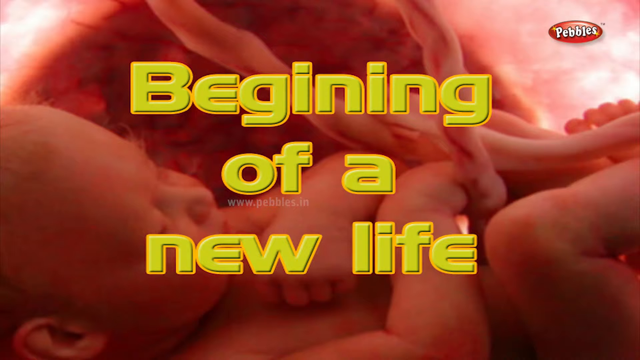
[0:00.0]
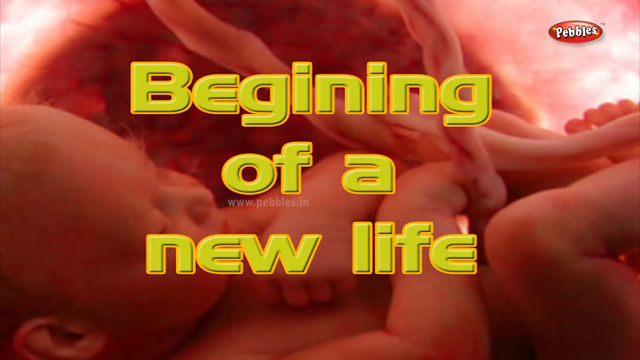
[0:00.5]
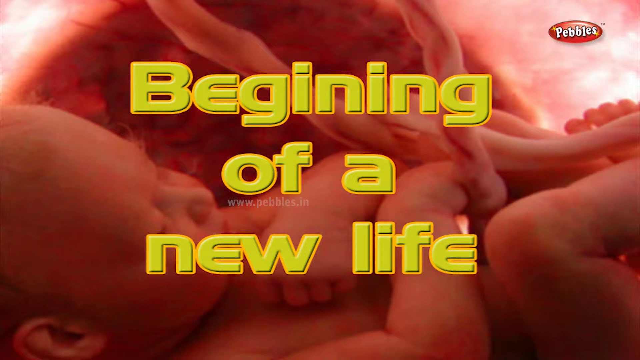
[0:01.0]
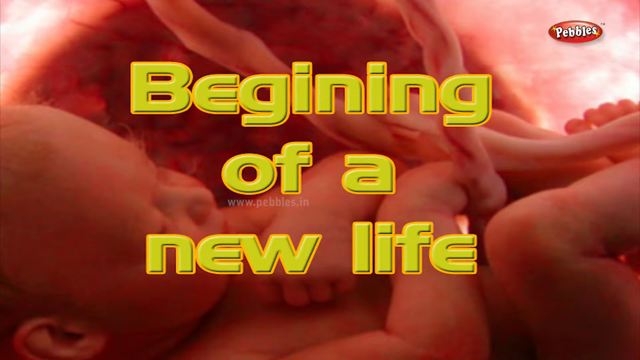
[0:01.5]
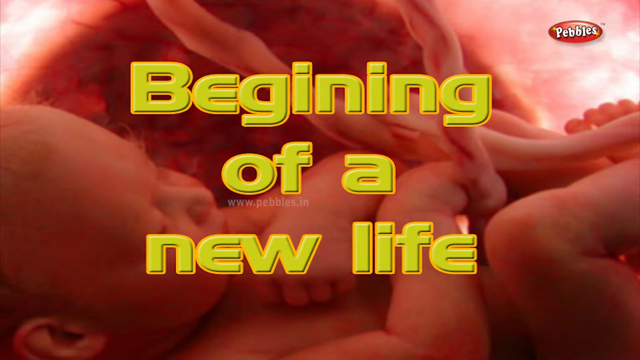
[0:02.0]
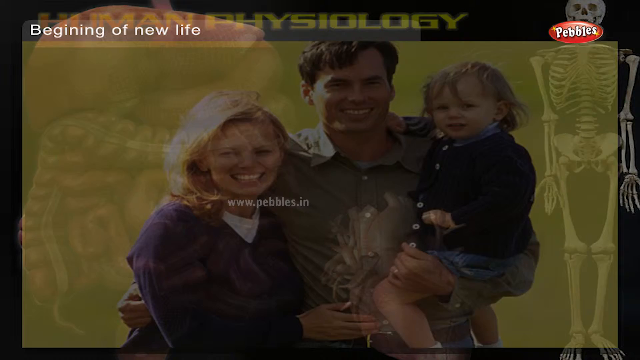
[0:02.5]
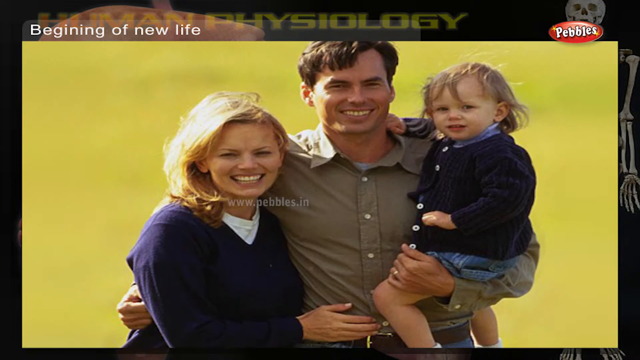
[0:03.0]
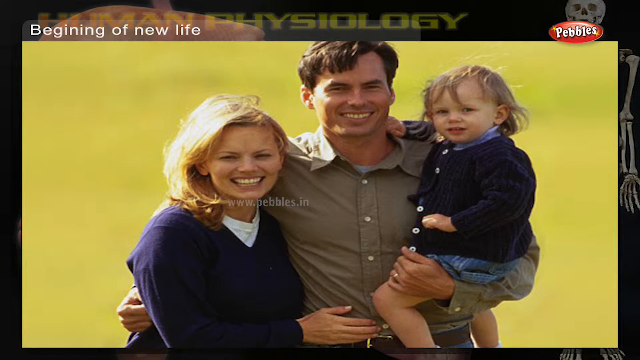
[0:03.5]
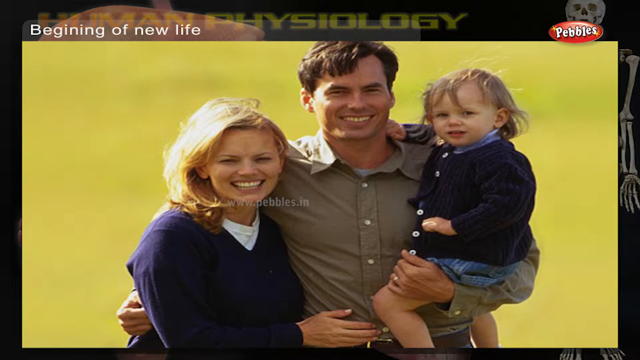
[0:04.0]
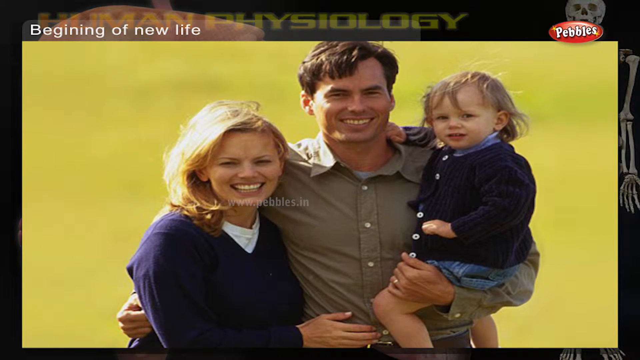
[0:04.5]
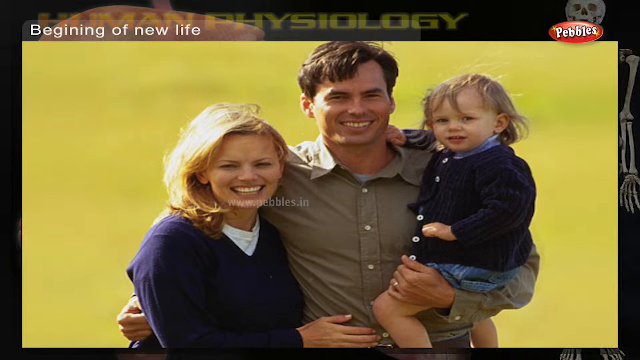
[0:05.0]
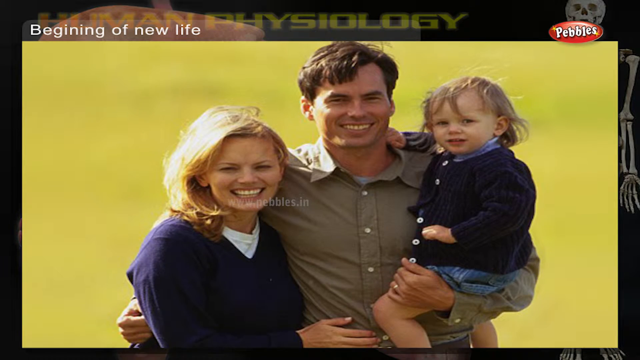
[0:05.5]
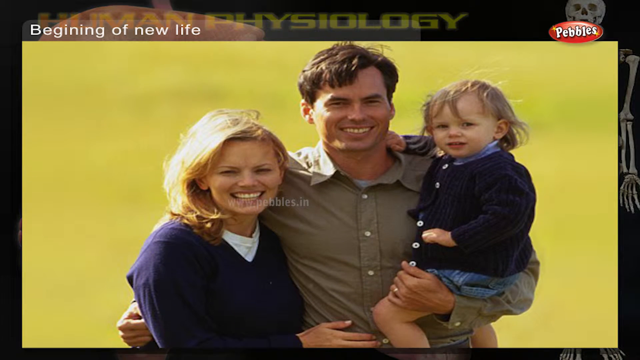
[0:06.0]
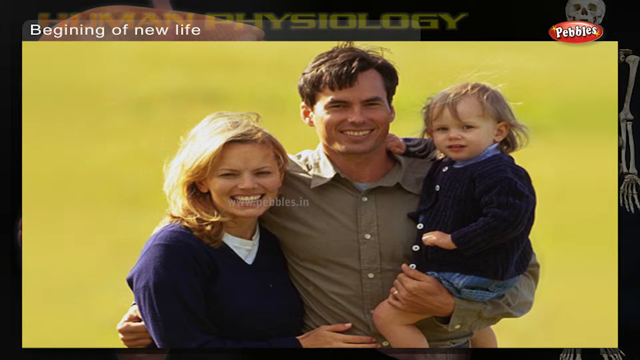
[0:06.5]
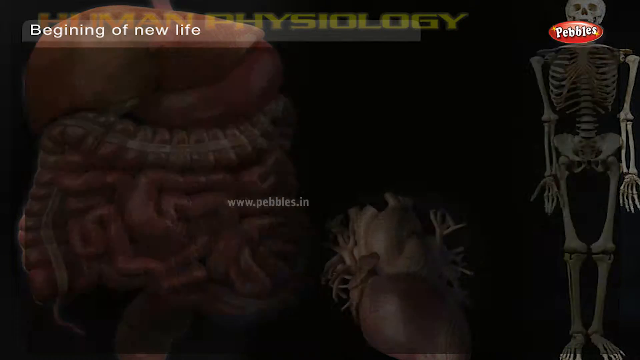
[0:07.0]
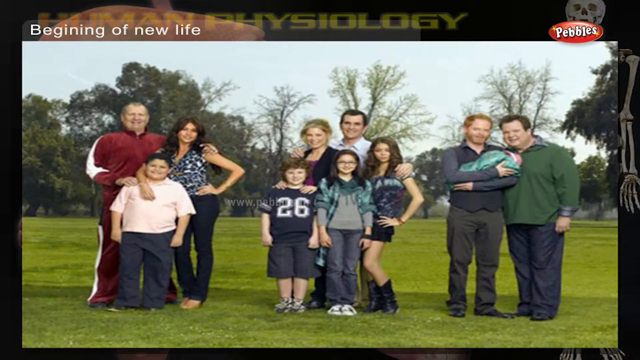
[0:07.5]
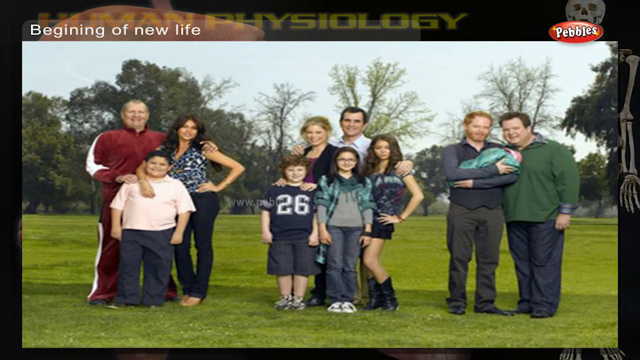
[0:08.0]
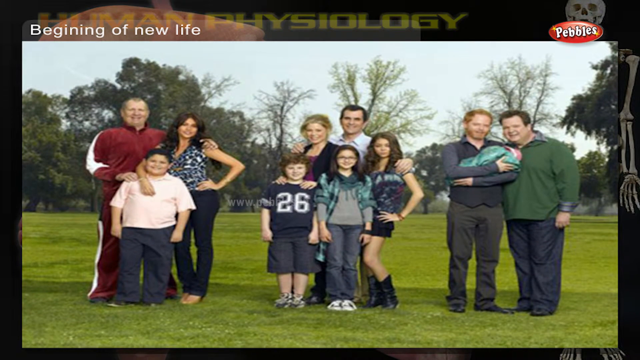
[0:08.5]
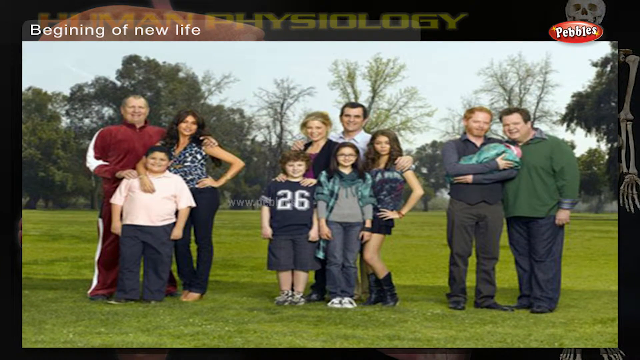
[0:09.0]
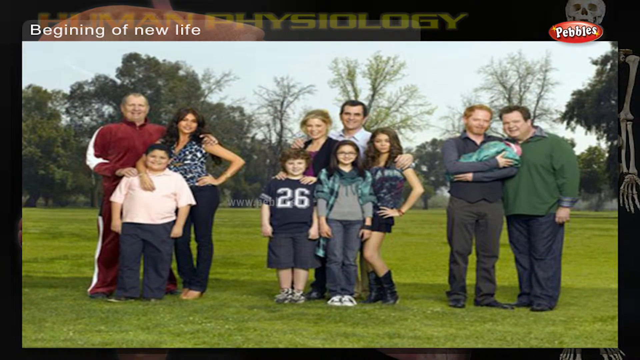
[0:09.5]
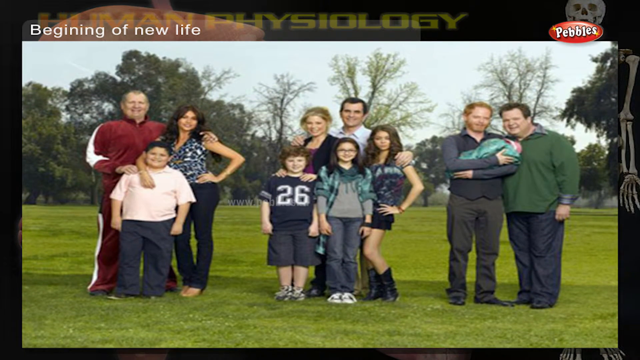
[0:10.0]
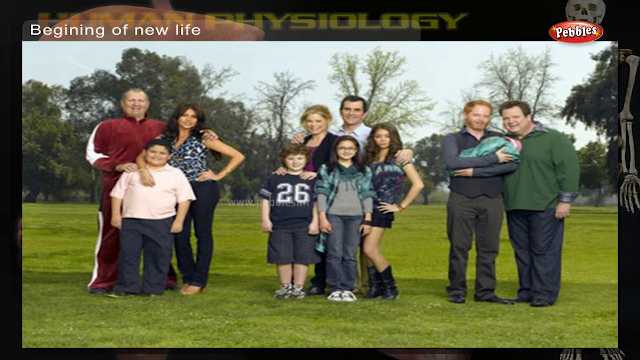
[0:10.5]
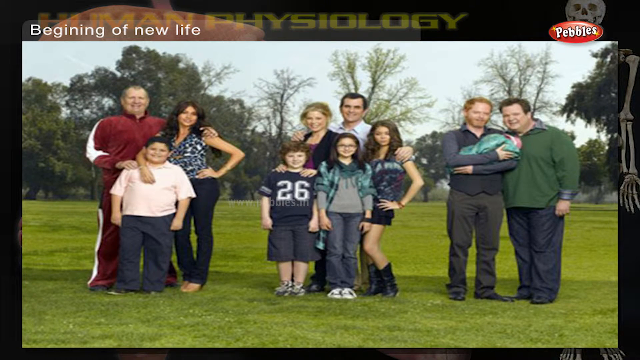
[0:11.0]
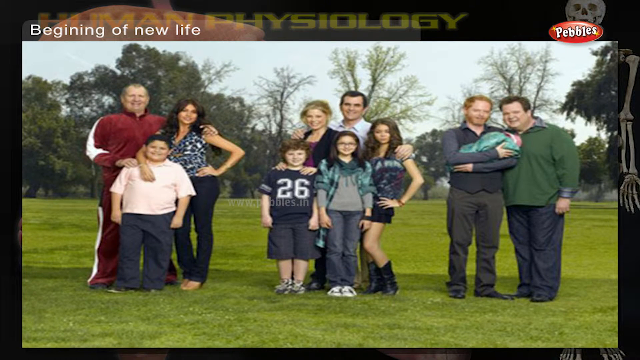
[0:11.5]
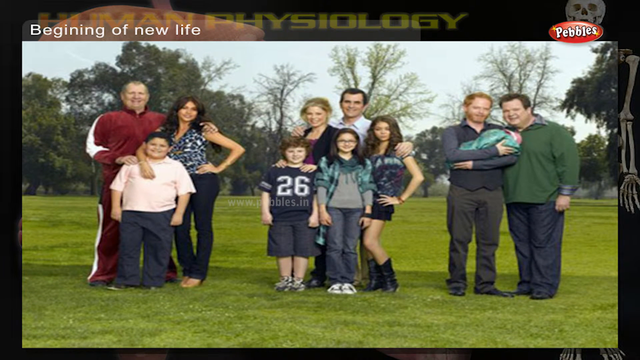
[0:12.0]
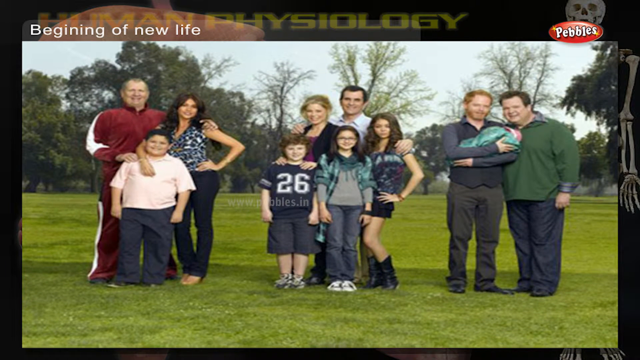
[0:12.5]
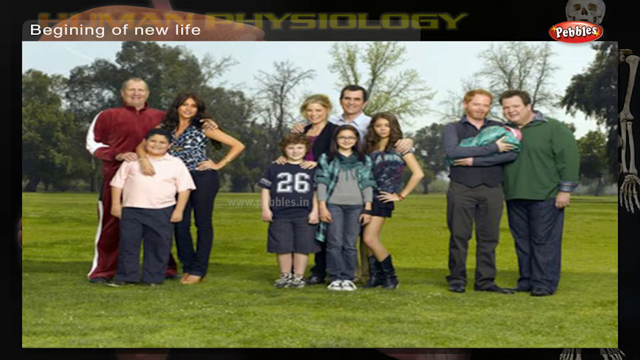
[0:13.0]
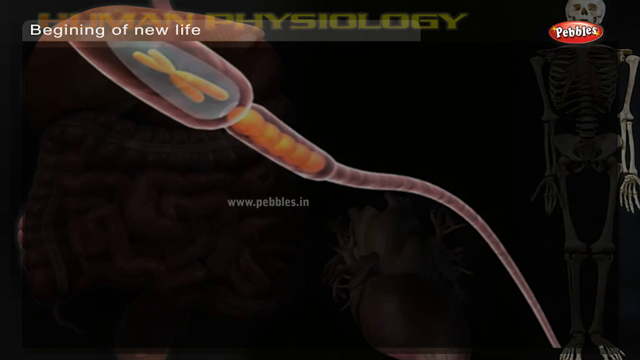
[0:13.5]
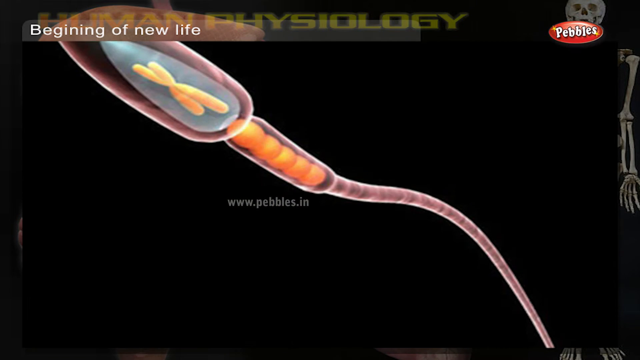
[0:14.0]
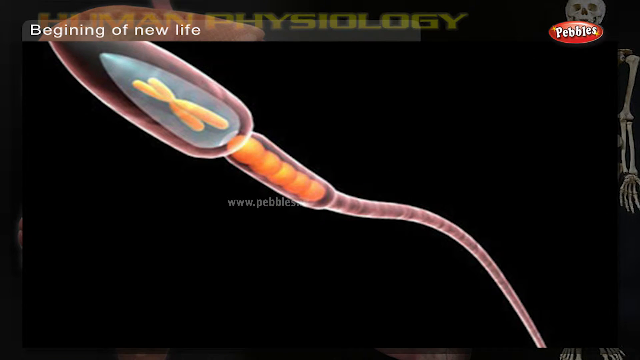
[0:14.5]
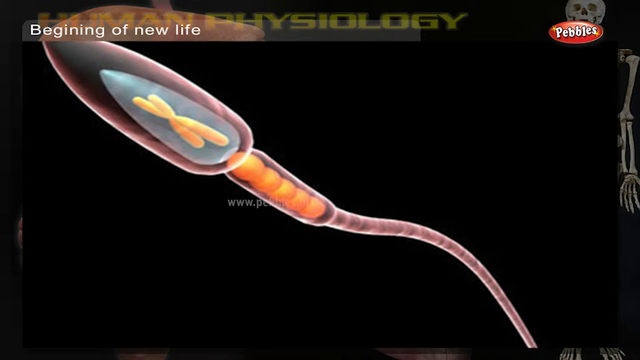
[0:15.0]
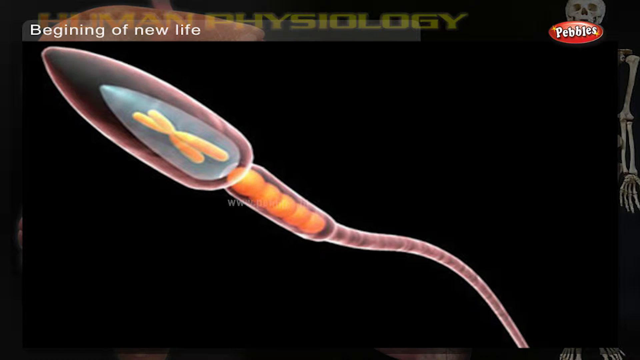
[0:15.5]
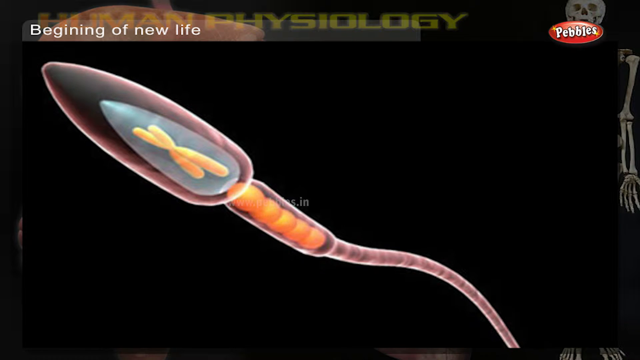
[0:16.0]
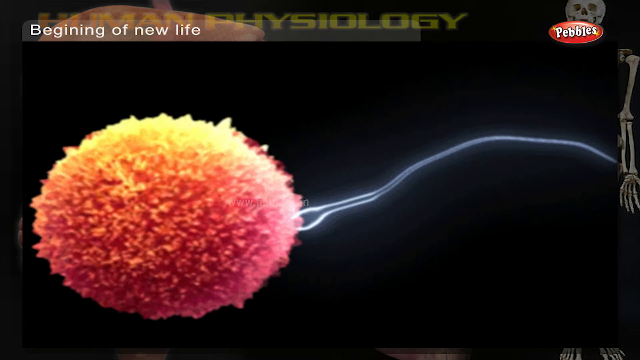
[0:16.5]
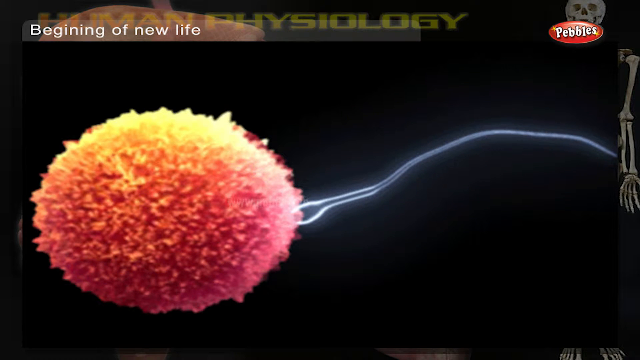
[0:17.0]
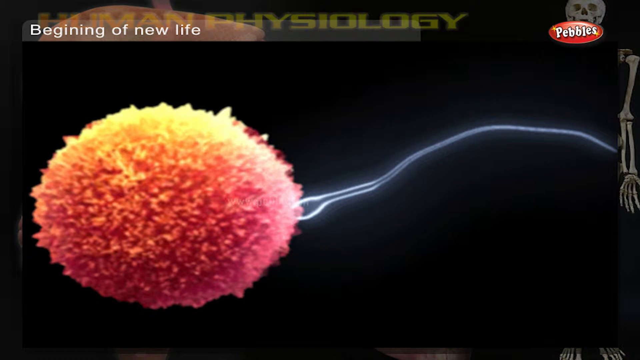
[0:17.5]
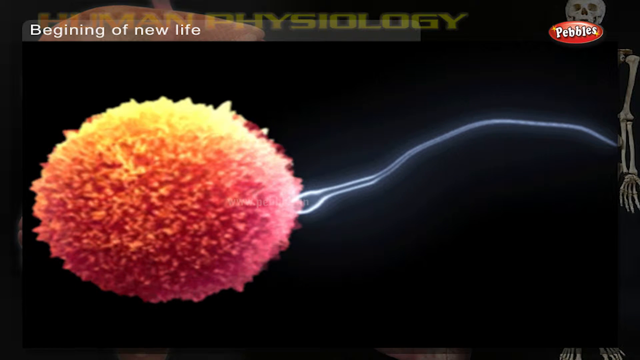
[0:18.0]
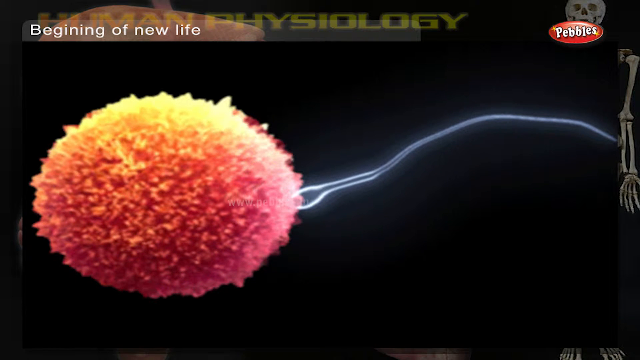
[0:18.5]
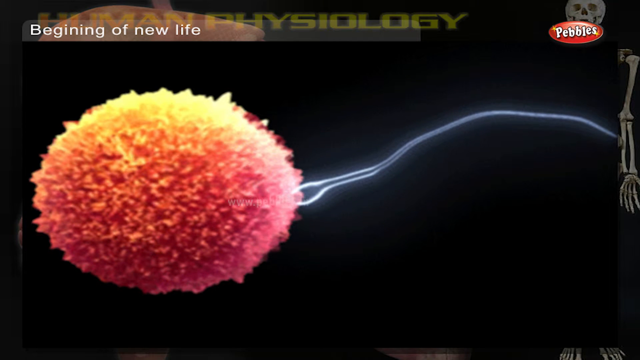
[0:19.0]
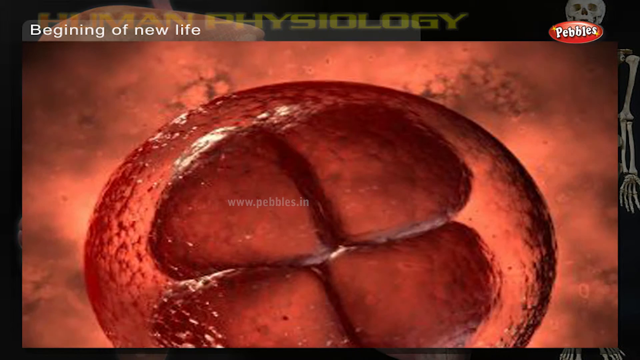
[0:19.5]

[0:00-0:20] The video opens with a picture of what appears to be a baby in the womb, with the words "beginning of a new life" as the title, and a Pebbles logo in the top right corner. Next comes a picture of a family: the mom has blonde hair and wears a blue sweater with a white undershirt, and the dad wears a beige button-up shirt and holds a baby girl with blonde hair in a blue button-up sweater with a blue dress underneath. The video cuts to more pictures of families, this time from Modern Family: Jay and Gloria's family, then Phil and Claire's family, then Mitchell and Cameron's family. A diagram follows that looks almost like an x-ray, possibly a diagram of a sperm showing what is inside. Another diagram shows what looks like a red fuzzy ball with two lines coming at it, possibly sperm reaching an egg.